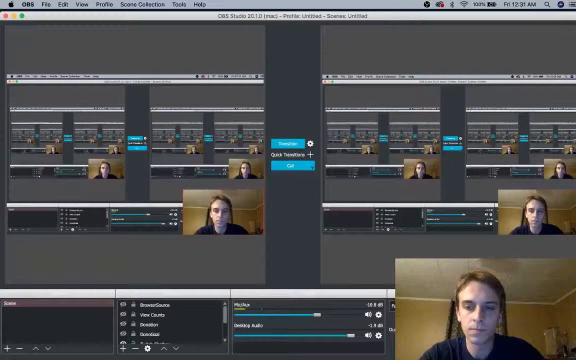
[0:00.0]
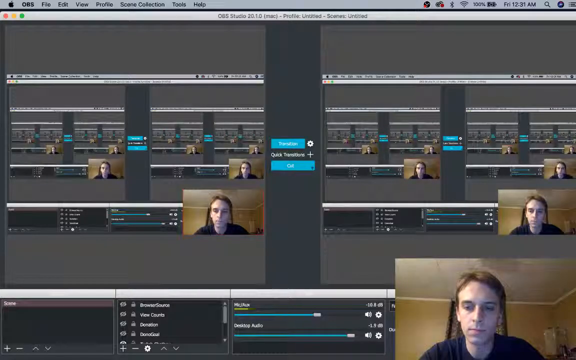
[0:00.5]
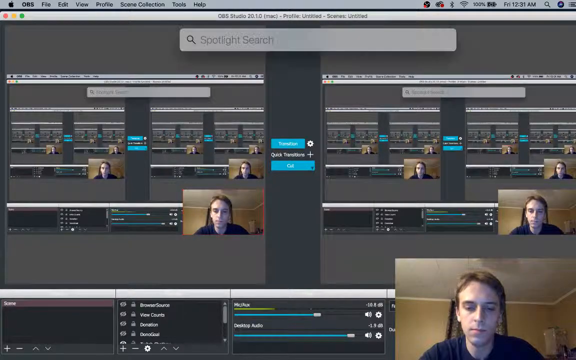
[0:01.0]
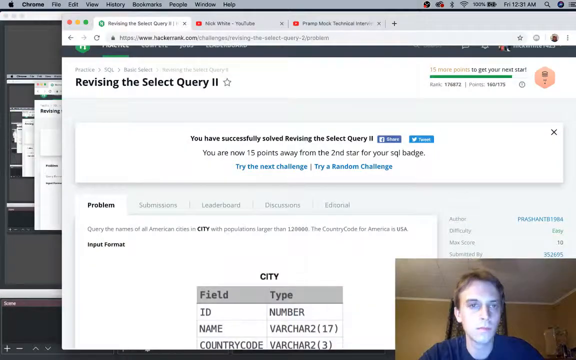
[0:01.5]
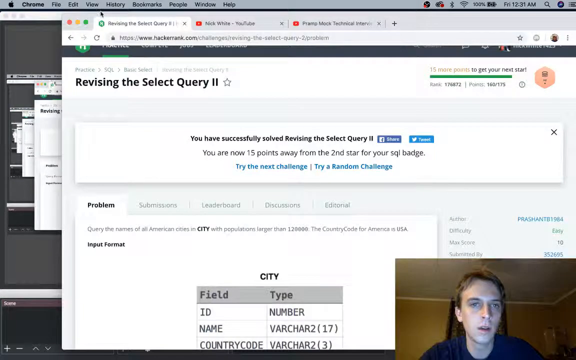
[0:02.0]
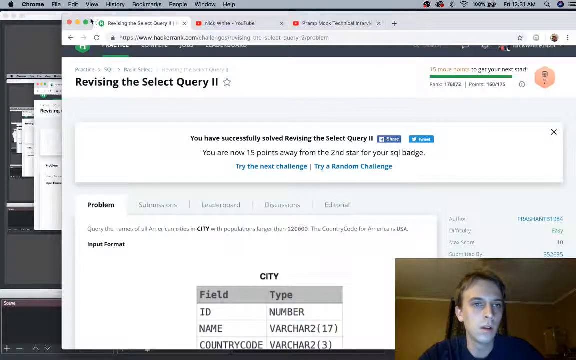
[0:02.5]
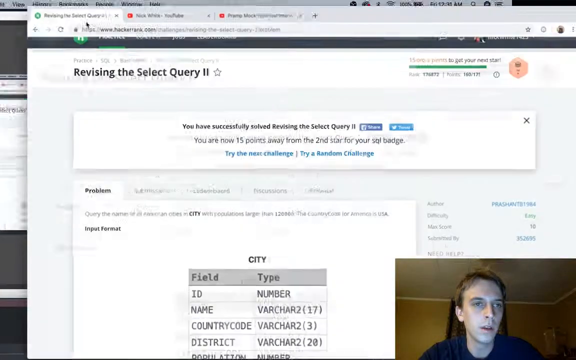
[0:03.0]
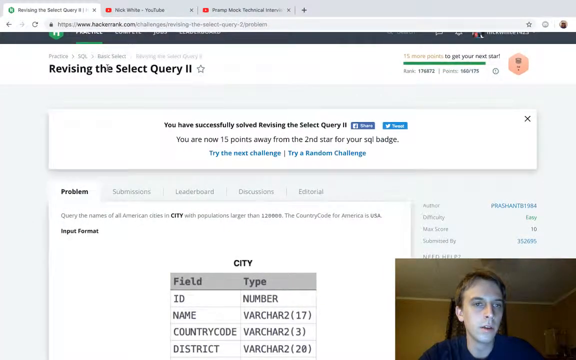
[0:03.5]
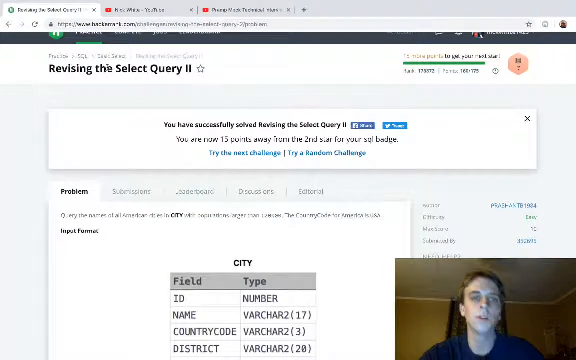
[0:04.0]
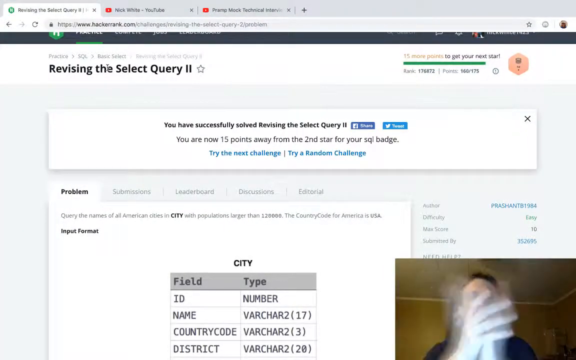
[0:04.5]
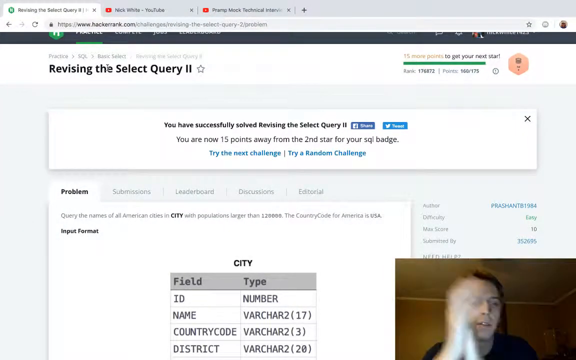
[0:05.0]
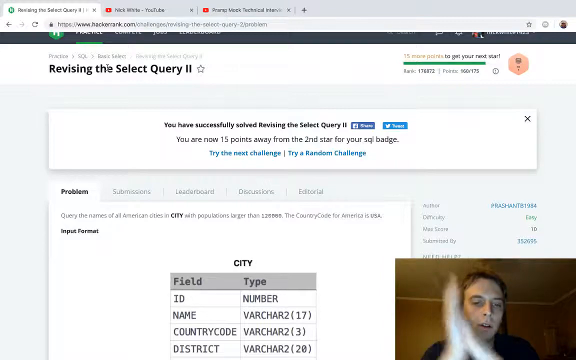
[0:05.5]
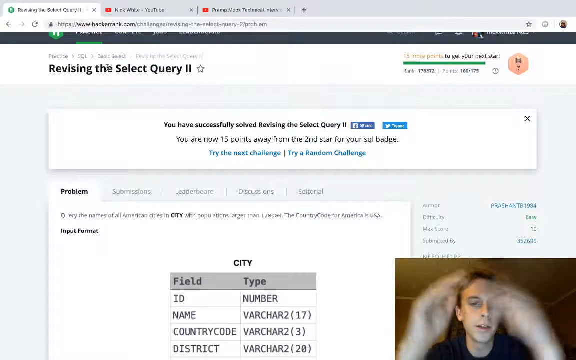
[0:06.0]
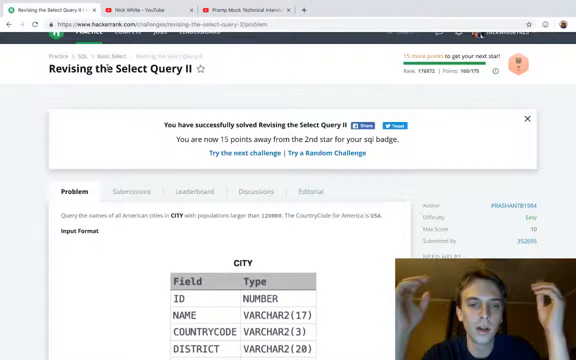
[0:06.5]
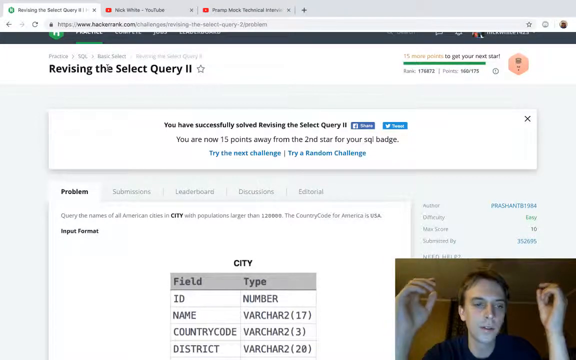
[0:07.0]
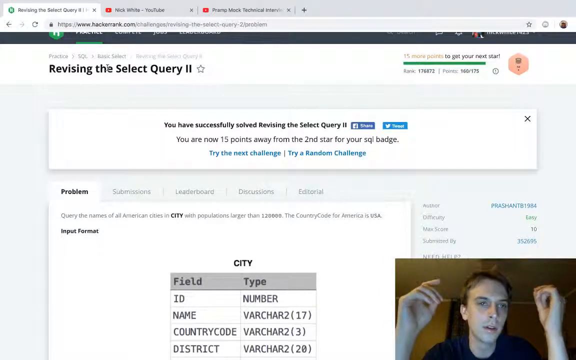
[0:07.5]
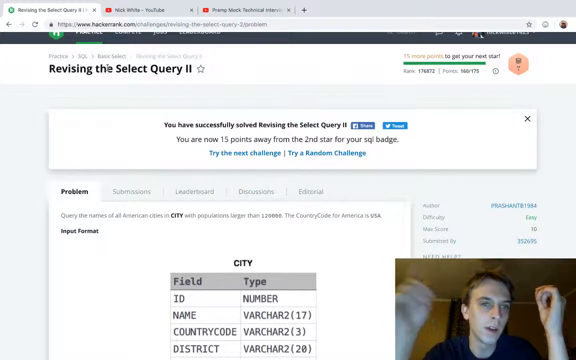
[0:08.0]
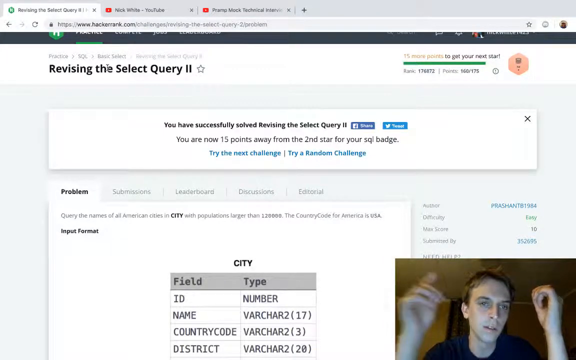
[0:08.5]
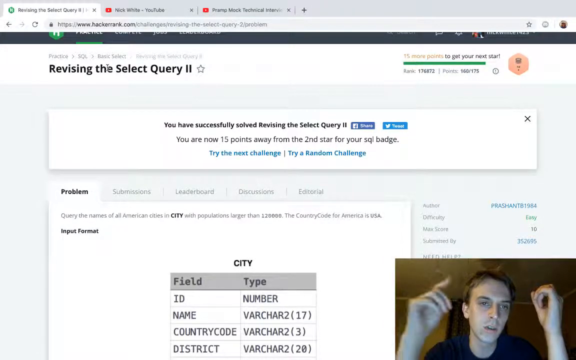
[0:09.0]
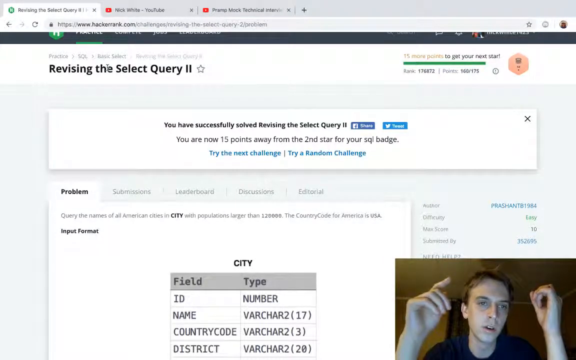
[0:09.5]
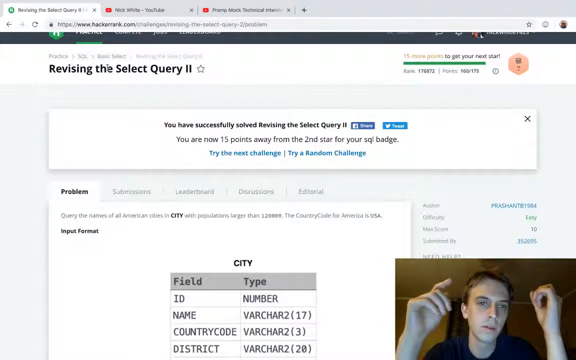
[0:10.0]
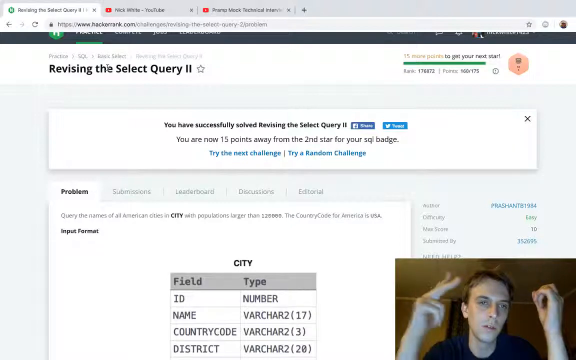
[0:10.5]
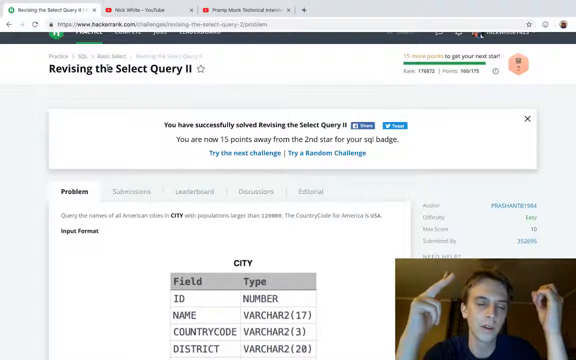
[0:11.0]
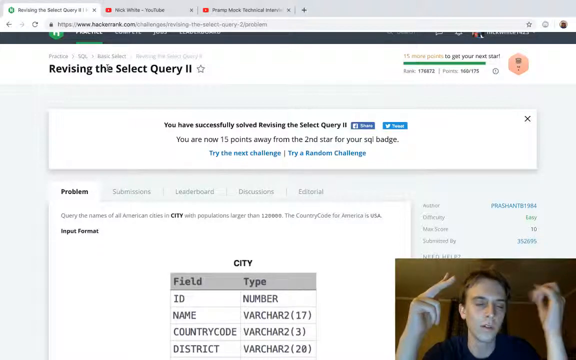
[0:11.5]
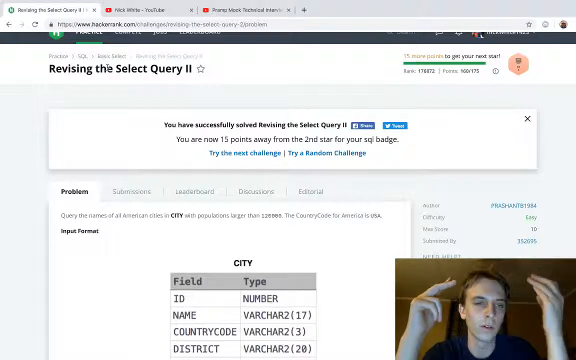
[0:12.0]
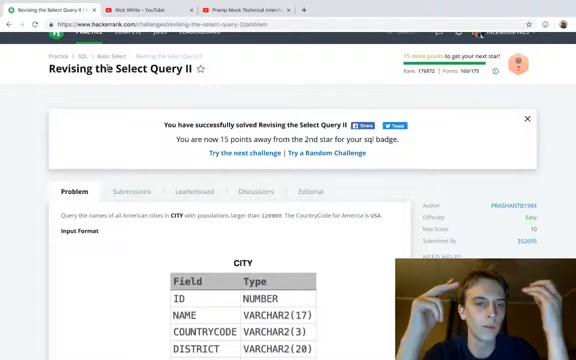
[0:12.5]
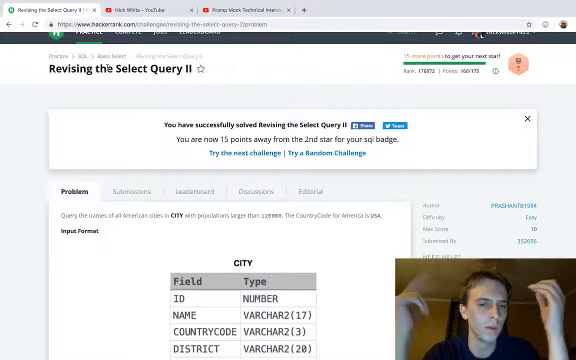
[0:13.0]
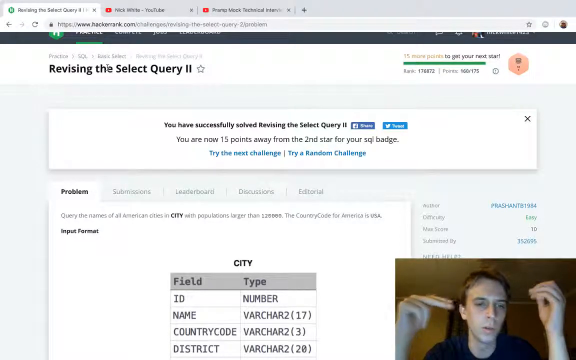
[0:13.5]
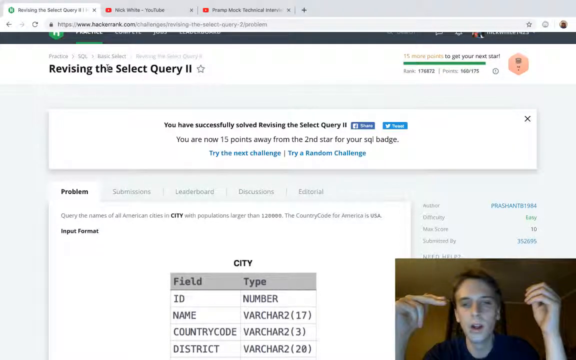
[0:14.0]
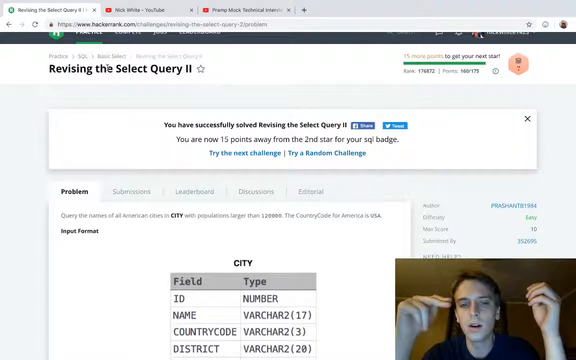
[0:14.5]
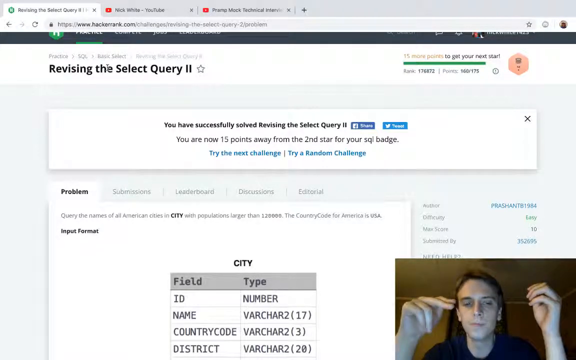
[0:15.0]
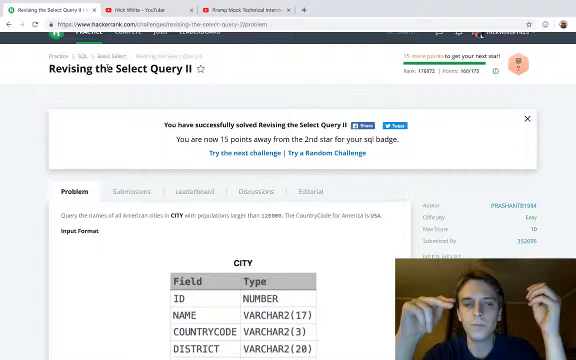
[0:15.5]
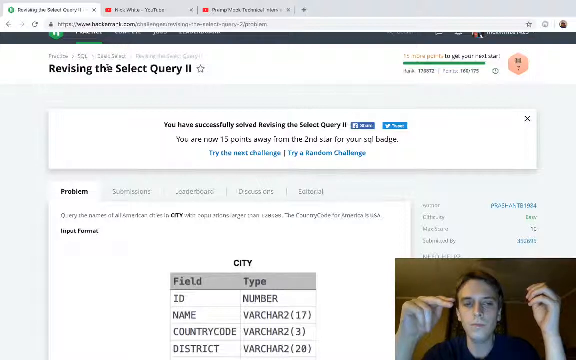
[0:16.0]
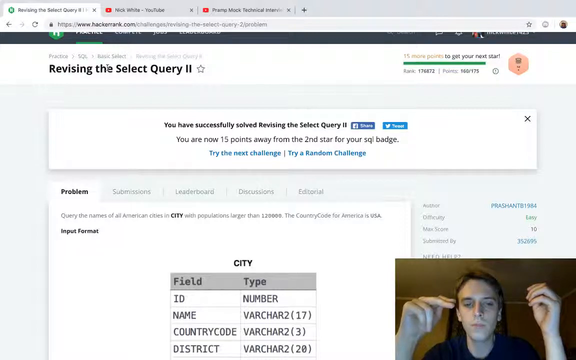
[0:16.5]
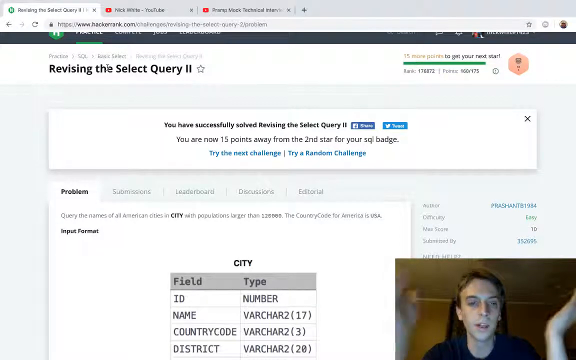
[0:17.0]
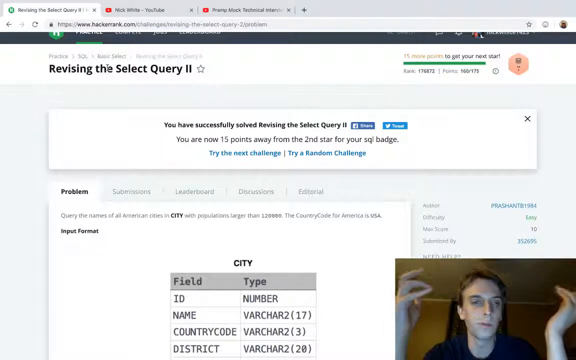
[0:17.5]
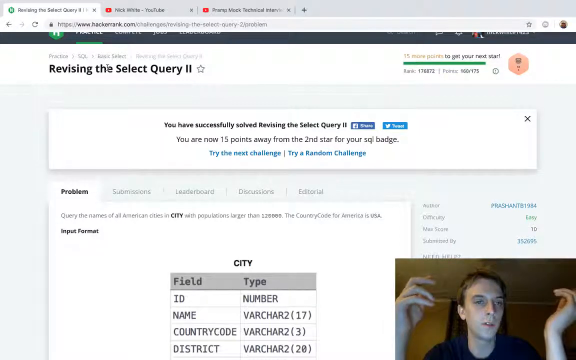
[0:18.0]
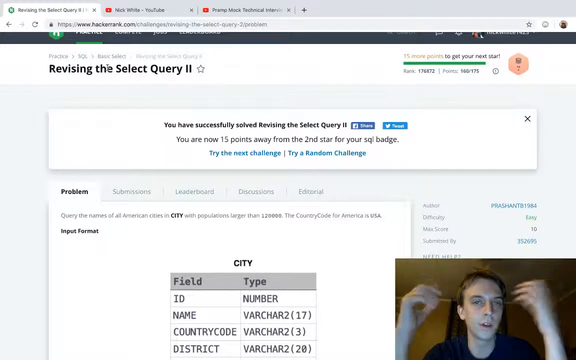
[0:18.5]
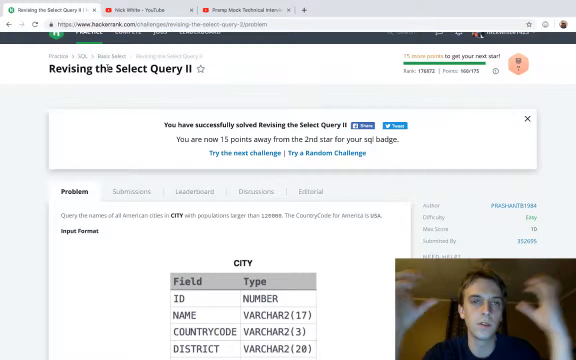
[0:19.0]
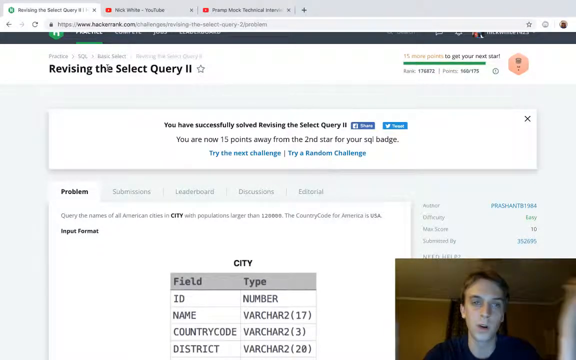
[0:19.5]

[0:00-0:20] Someone appears to be sharing their screen and talking through what is on it. Text reads "revising the select query too." In the small bottom-right corner of the screen is a man talking at length: a white man with pale skin, short brown hair and a blue shirt. The screen seems to be about a mirror image of him. He opens a web page with three tabs on it, about revising the select query. He seems a little frustrated and appears to be explaining something. The page says "you've successfully solved revising the select query too. You are now 15 points away from" something, and it is unclear whether it is a game or a test. Below that is something like "city", with ID, name, country code and districts, apparently some kind of personal information.